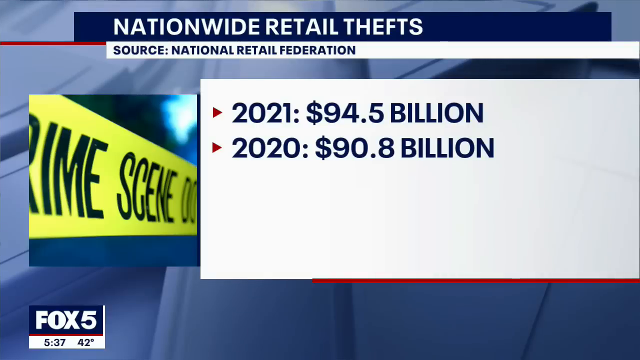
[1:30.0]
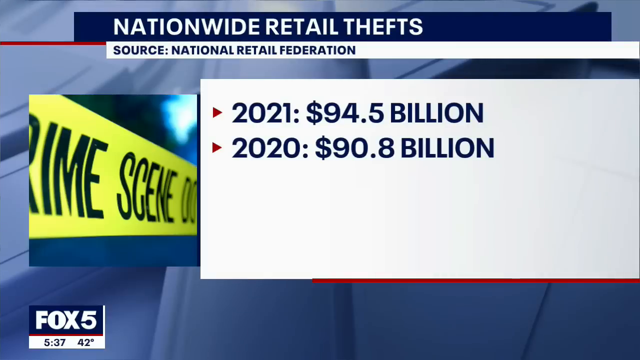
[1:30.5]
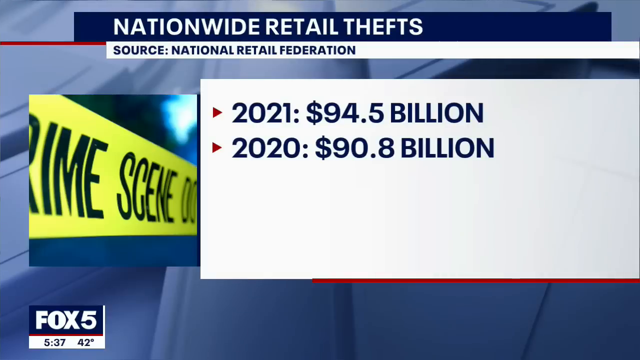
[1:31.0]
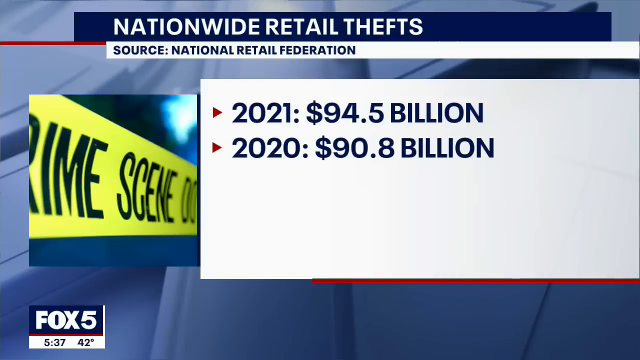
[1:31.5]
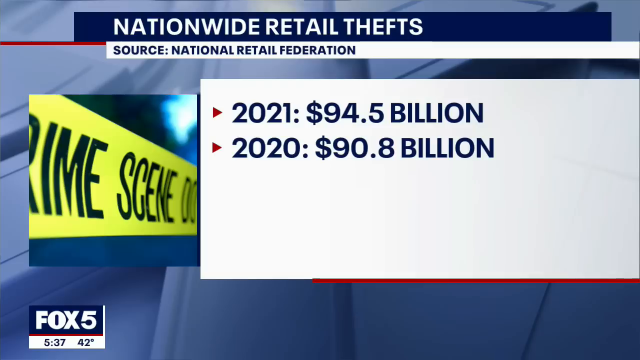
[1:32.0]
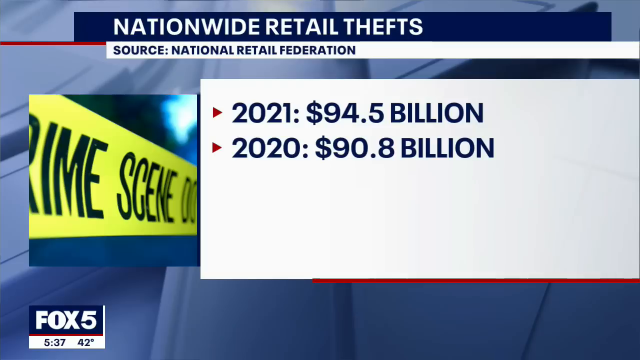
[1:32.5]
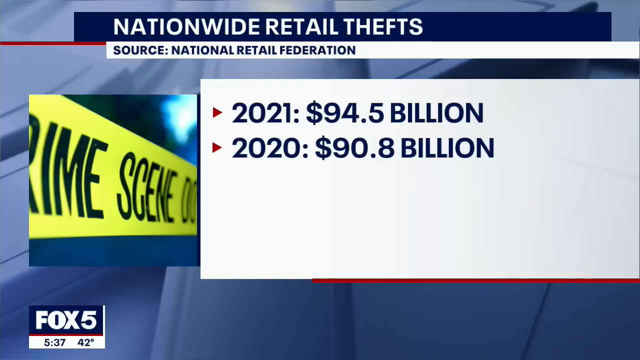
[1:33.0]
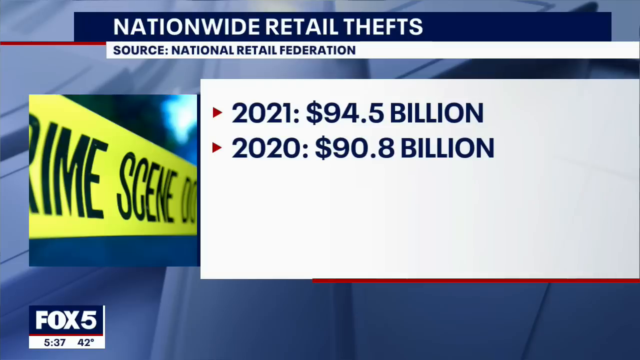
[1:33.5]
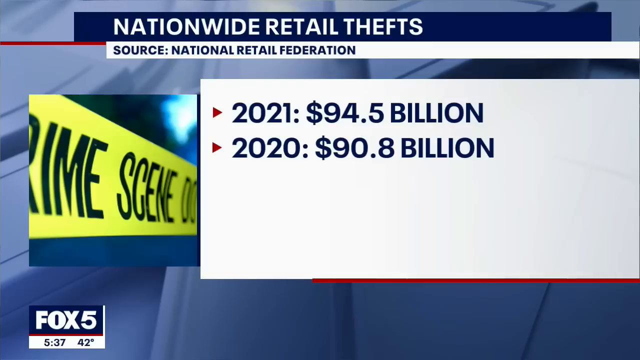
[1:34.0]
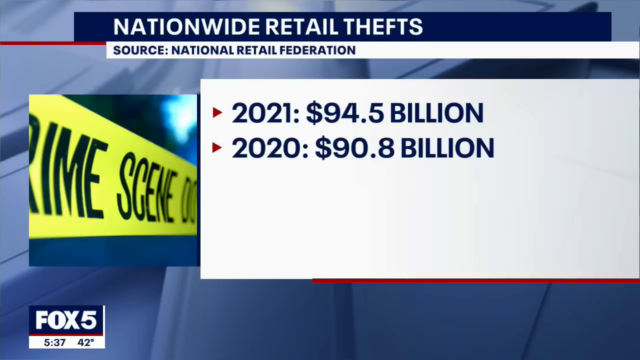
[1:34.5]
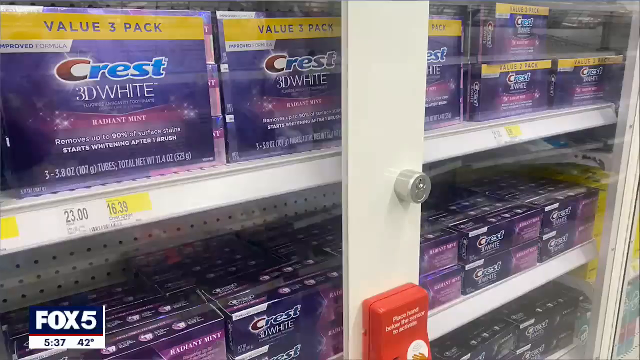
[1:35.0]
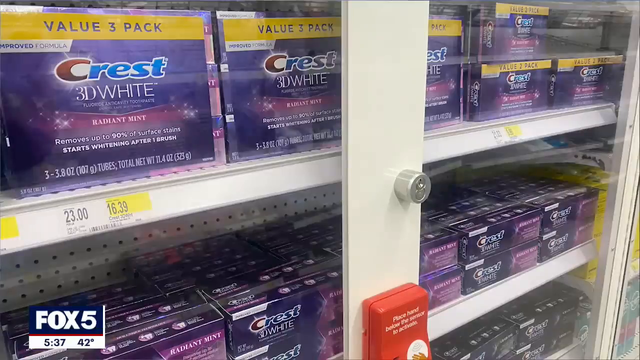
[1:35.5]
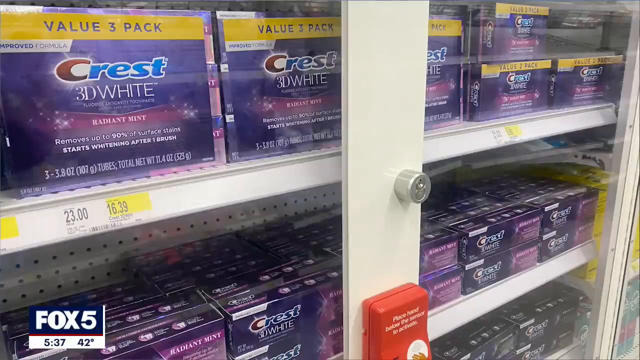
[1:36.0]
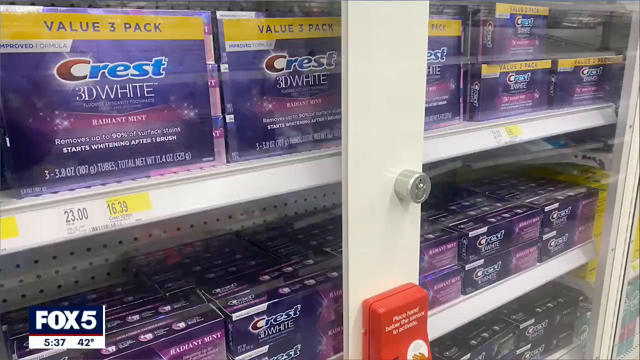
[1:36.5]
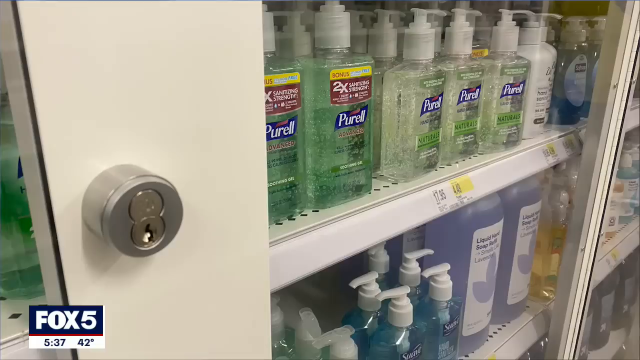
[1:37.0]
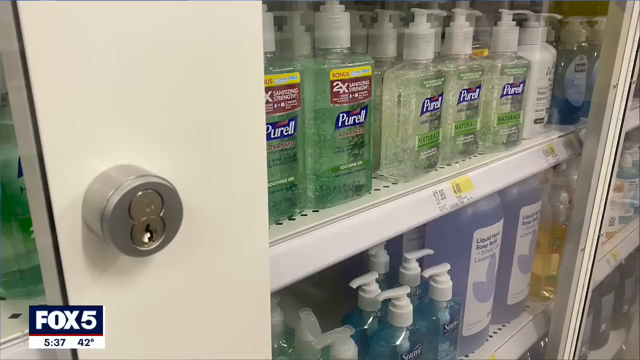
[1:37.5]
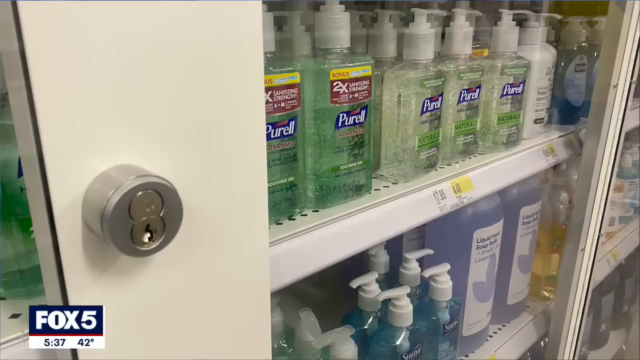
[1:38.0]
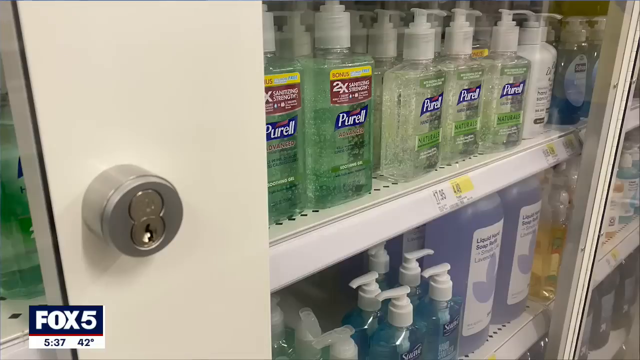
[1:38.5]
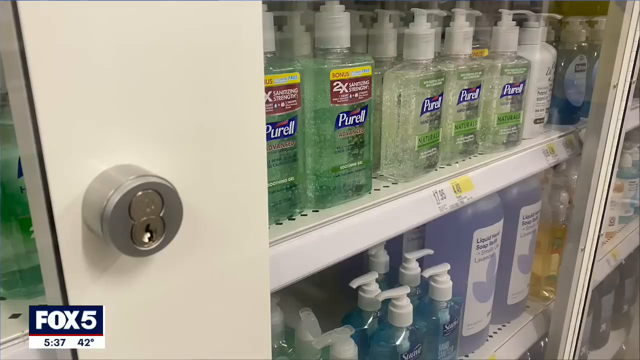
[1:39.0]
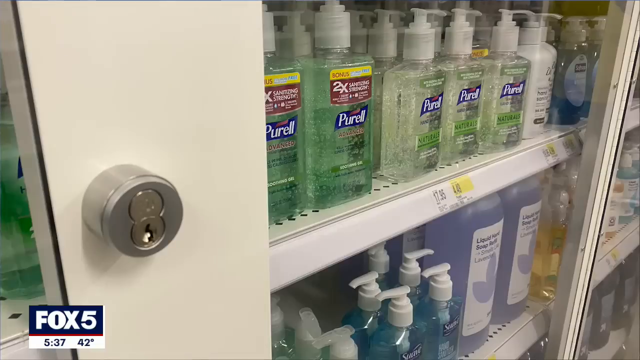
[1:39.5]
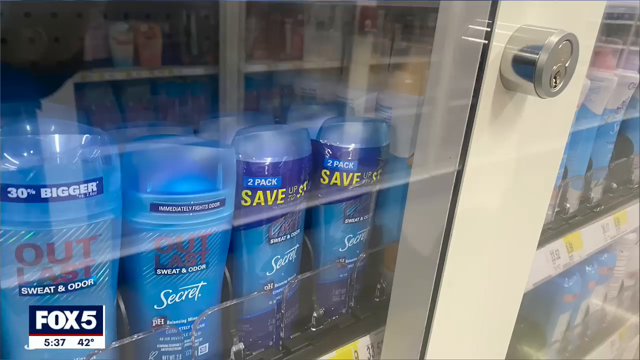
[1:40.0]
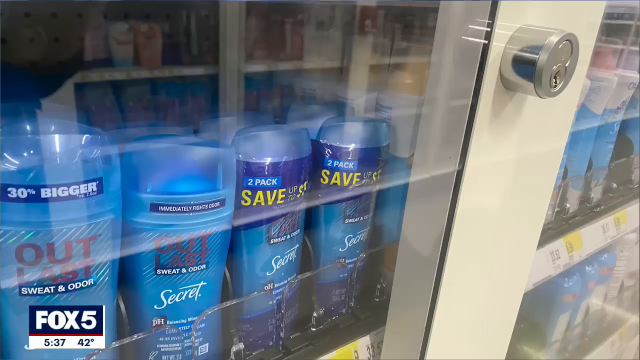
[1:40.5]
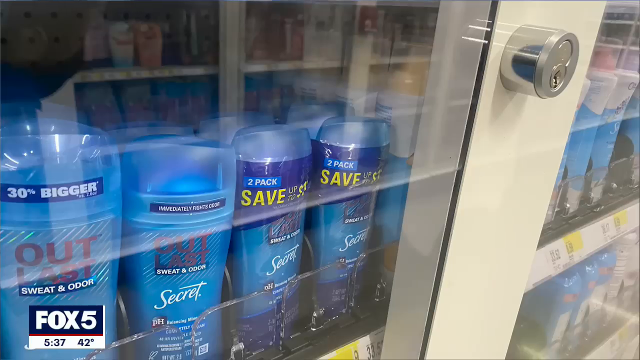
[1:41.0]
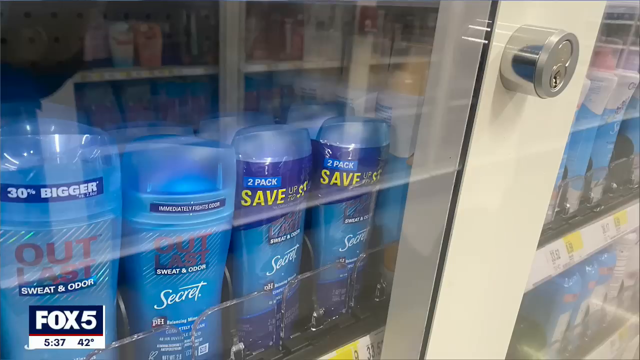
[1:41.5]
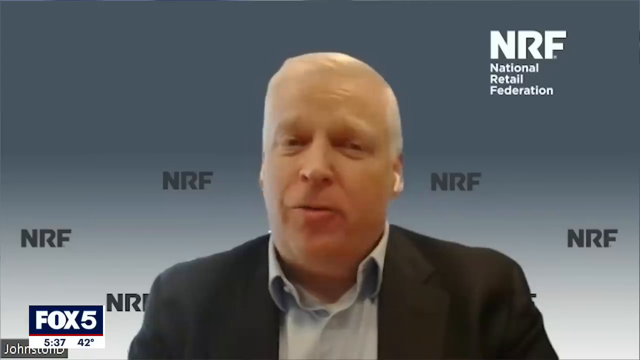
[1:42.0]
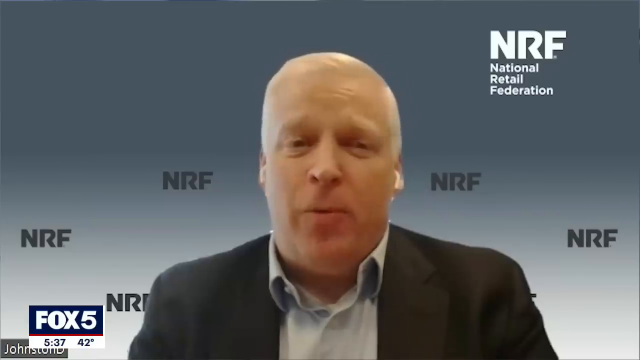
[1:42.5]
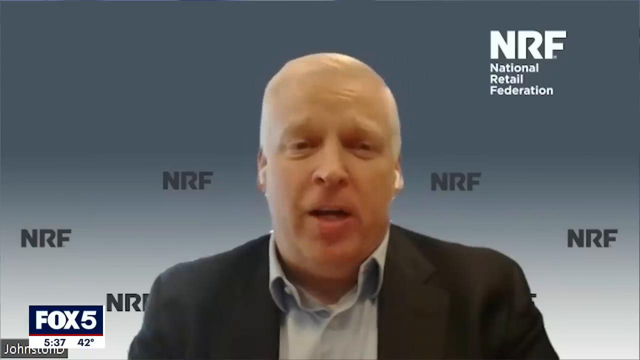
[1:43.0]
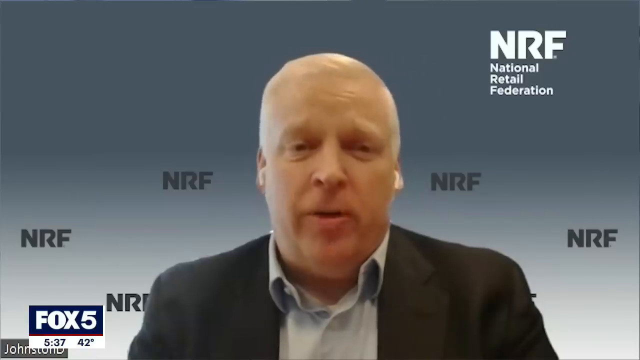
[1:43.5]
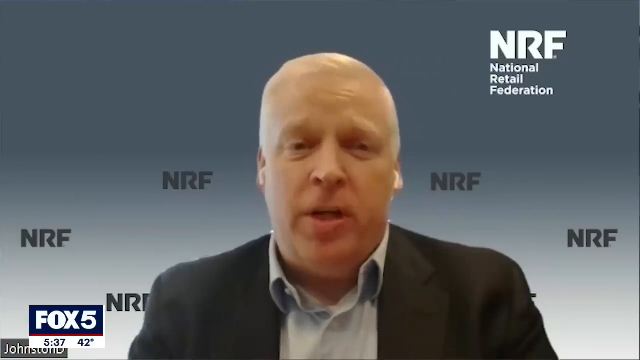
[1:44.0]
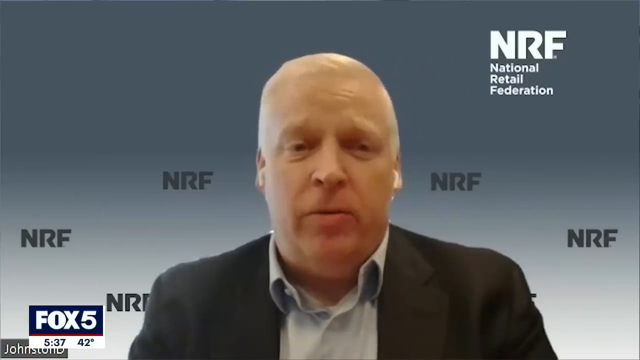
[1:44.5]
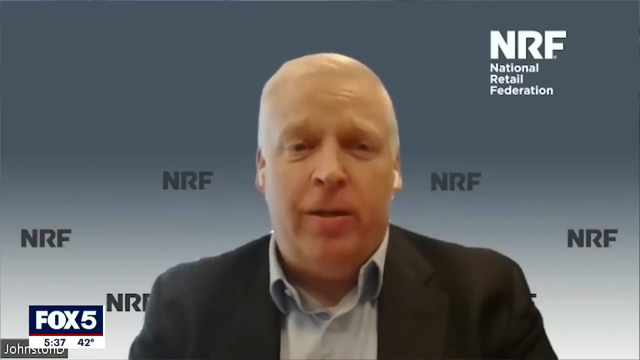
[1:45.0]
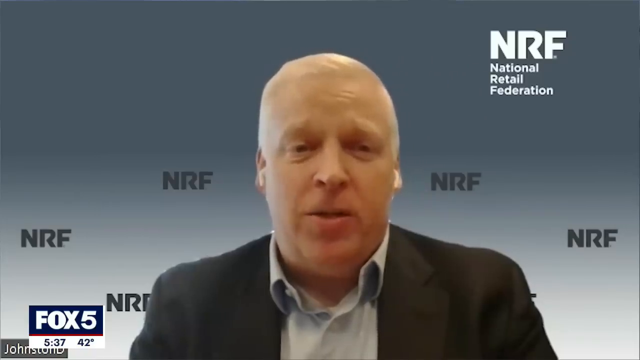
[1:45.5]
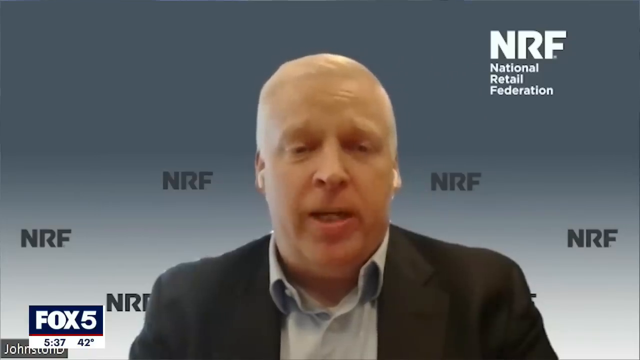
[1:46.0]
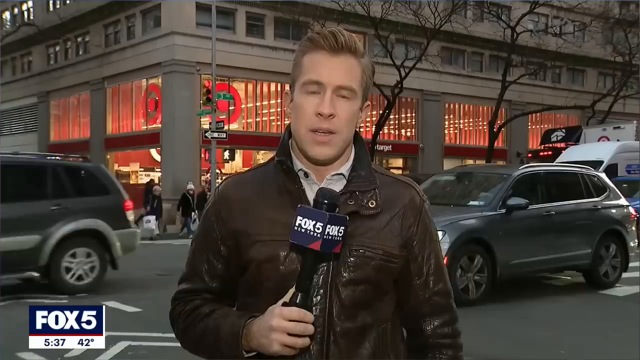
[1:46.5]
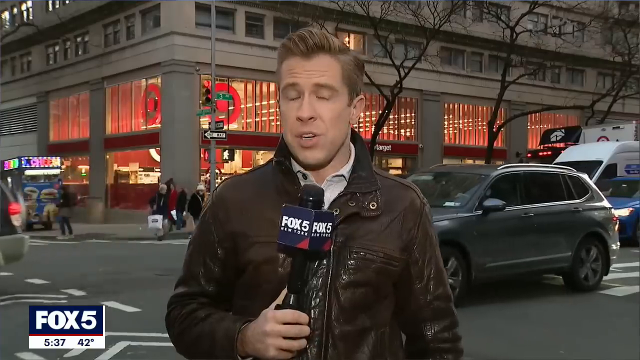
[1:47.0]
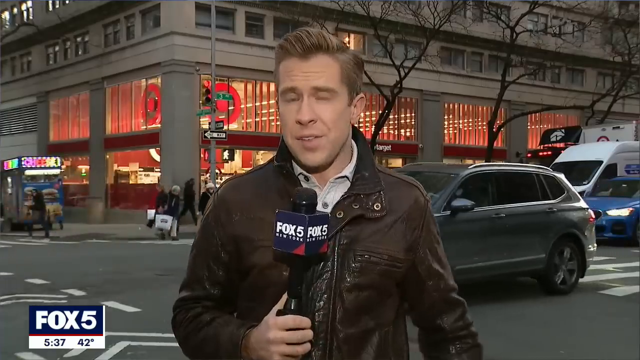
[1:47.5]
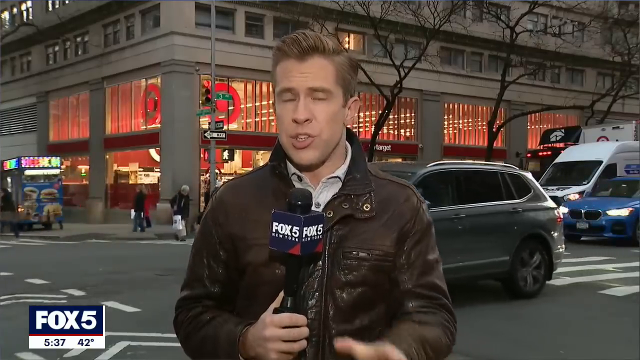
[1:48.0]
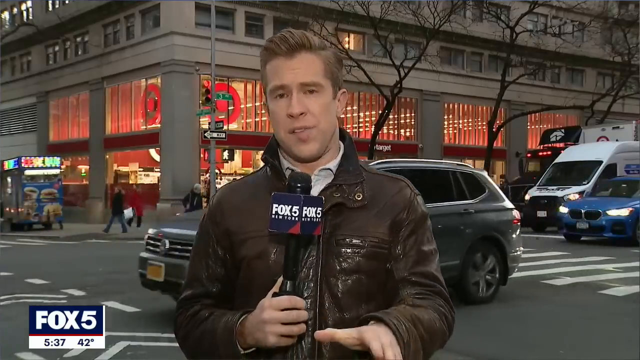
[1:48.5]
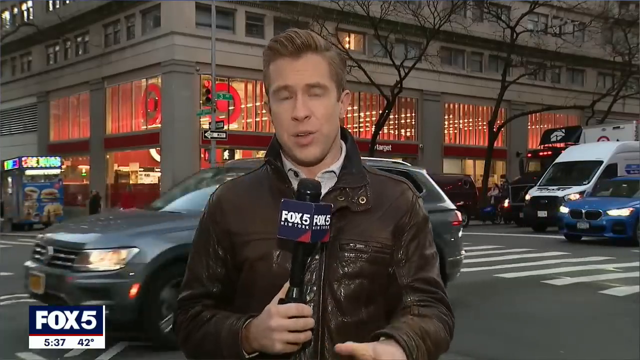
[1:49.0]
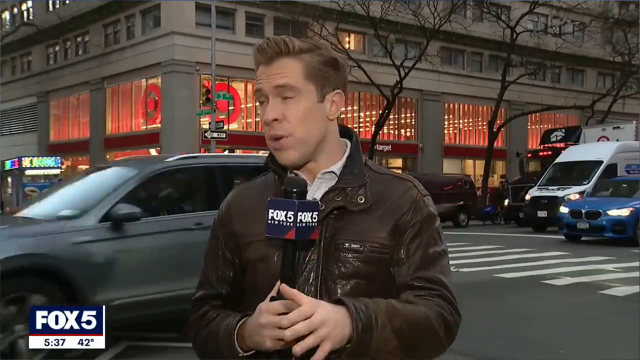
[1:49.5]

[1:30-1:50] At the top of the screen, in white capital letters across a navy banner, it reads "NATIONWIDE RETAIL THEFTS," and just below that it says "Source: National Retail Federation." Below that are figures for 2021 and 2020: "$94.5 billion" next to 2021 and "$90.8 billion" next to 2020. The Fox 5 News logo is in the lower left part of the screen. Close-up images then show items inside a store that appear to be locked up, including mouthwash, hand sanitizer, deodorant and other items. After these items, the man speaking to the camera is shown once again. The scene then moves outside to a news reporter standing on a dimly lit street. He is a white man with brown hair, wearing a leather jacket and holding a microphone. Behind him is the outside of a Target, and cars drive by.